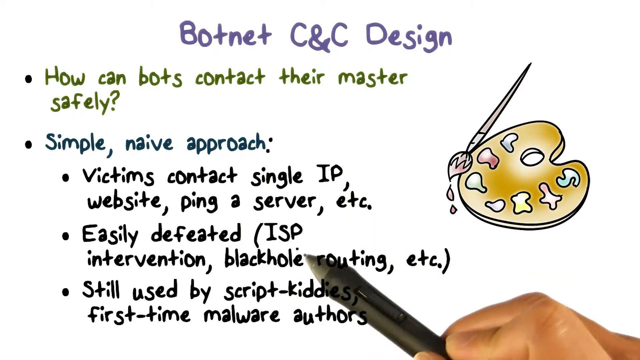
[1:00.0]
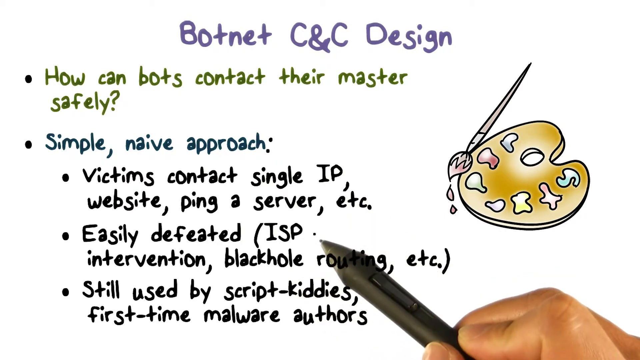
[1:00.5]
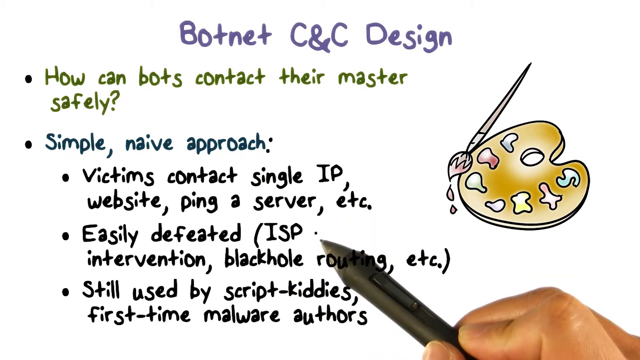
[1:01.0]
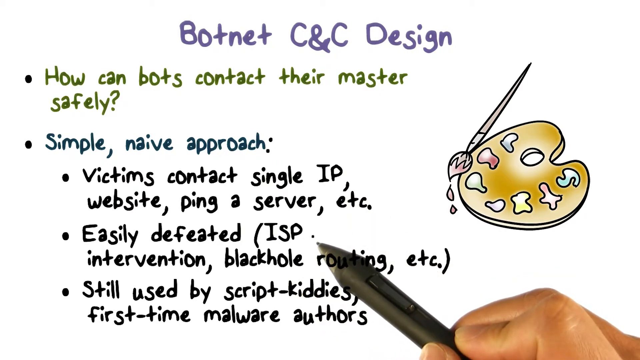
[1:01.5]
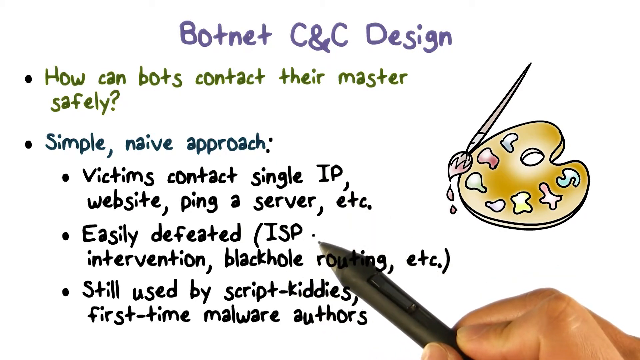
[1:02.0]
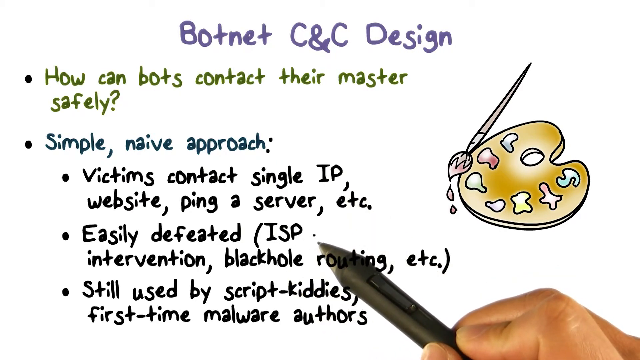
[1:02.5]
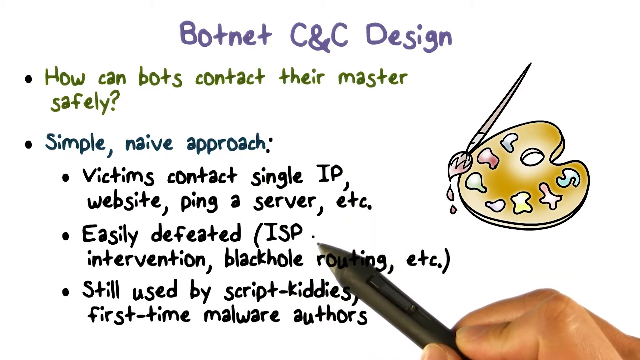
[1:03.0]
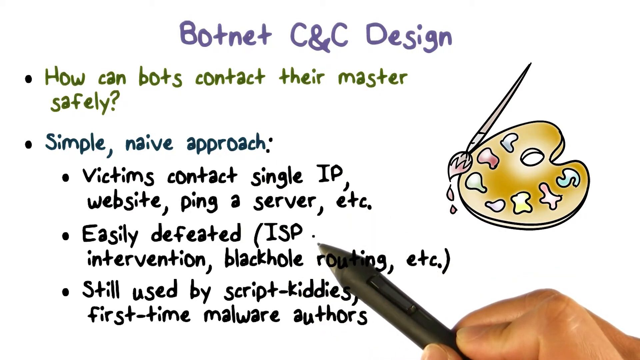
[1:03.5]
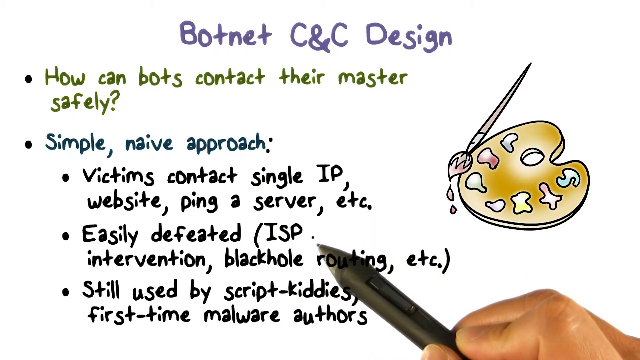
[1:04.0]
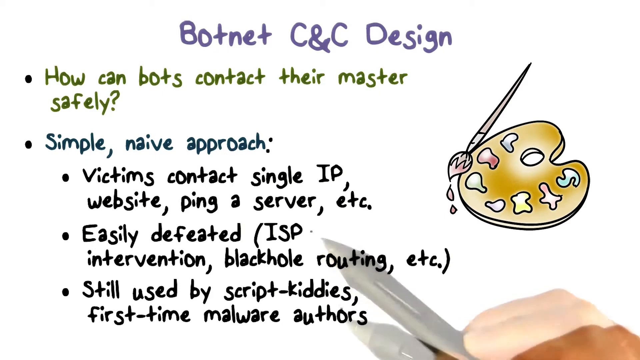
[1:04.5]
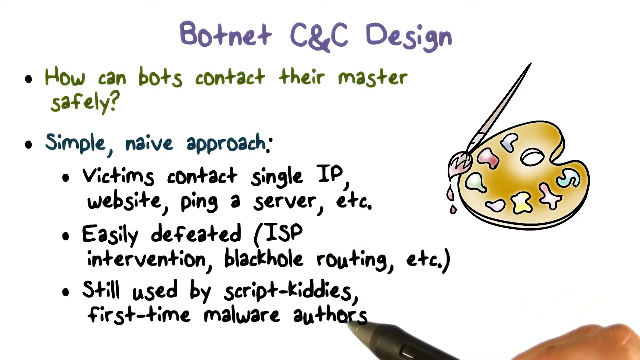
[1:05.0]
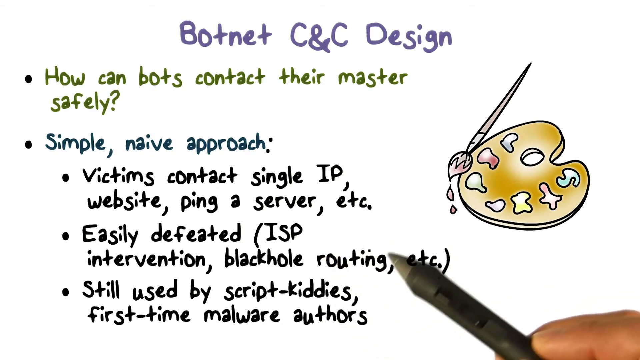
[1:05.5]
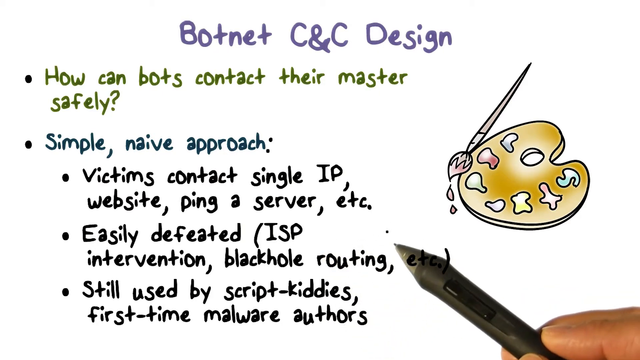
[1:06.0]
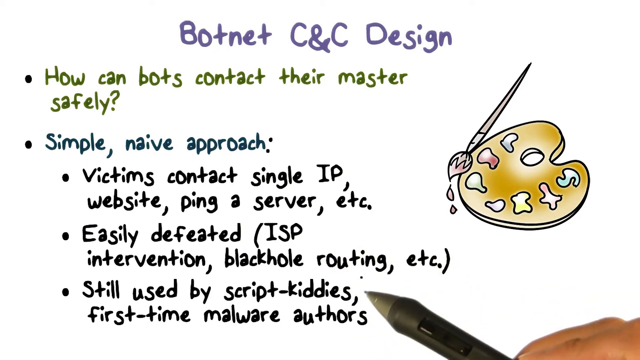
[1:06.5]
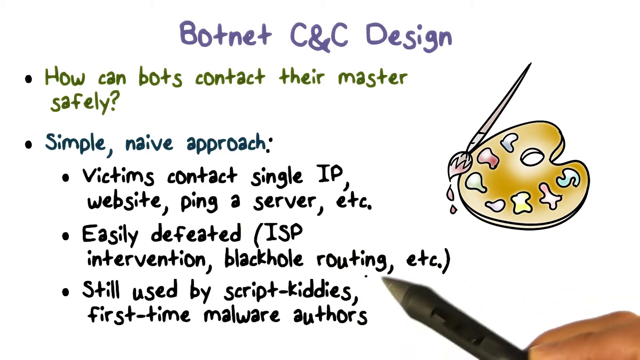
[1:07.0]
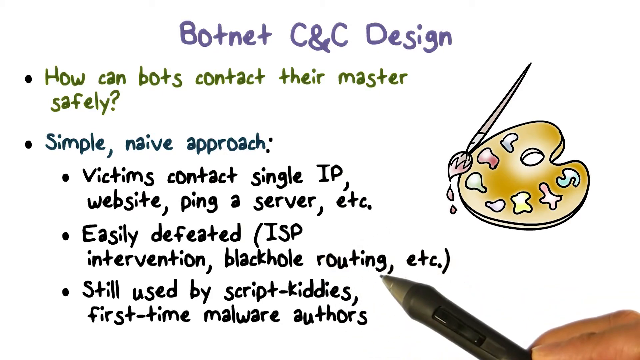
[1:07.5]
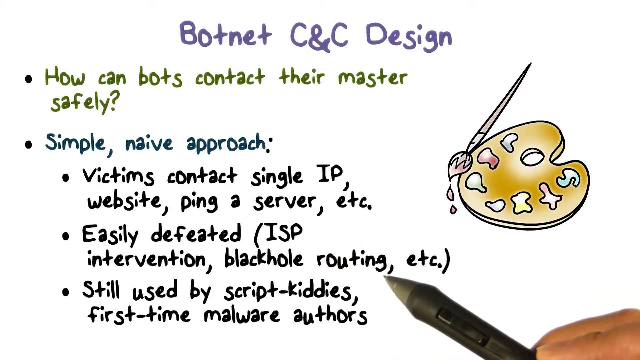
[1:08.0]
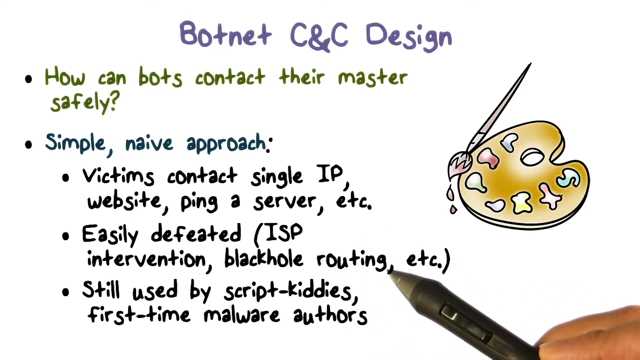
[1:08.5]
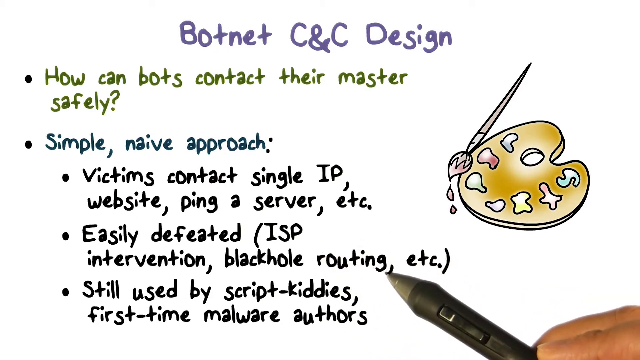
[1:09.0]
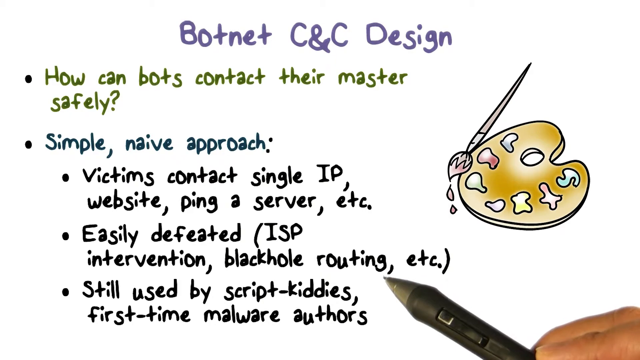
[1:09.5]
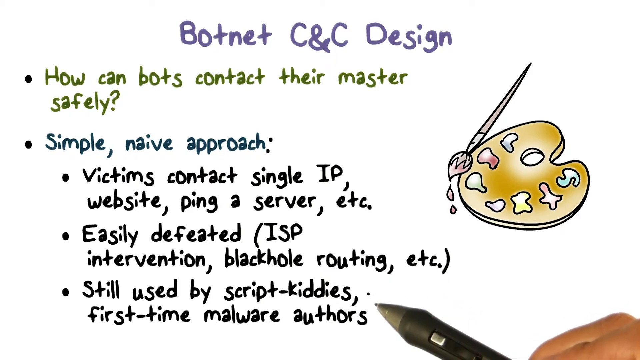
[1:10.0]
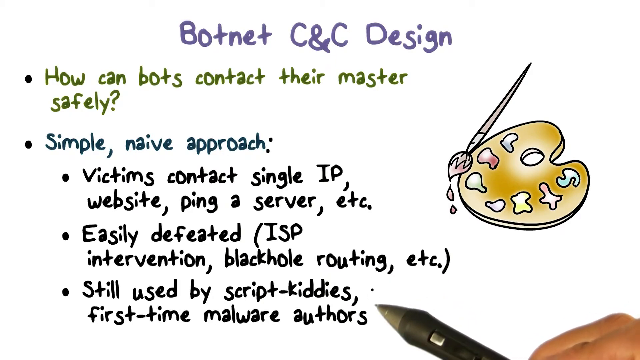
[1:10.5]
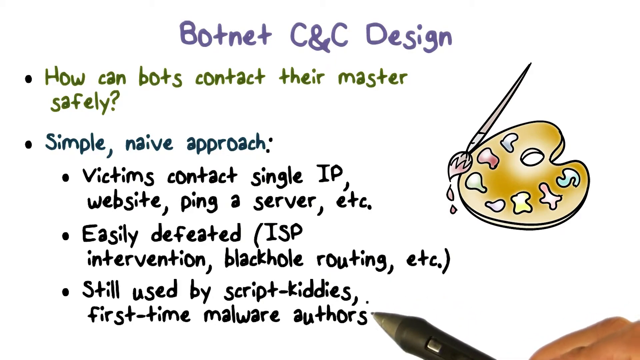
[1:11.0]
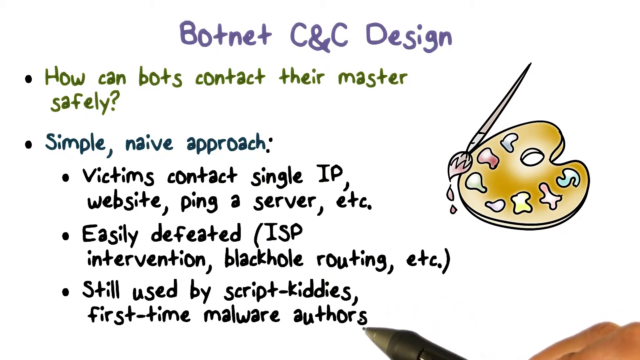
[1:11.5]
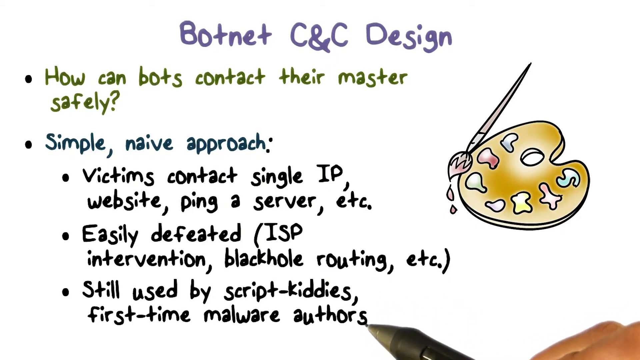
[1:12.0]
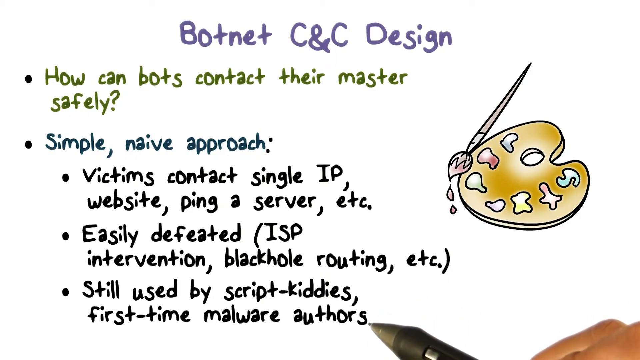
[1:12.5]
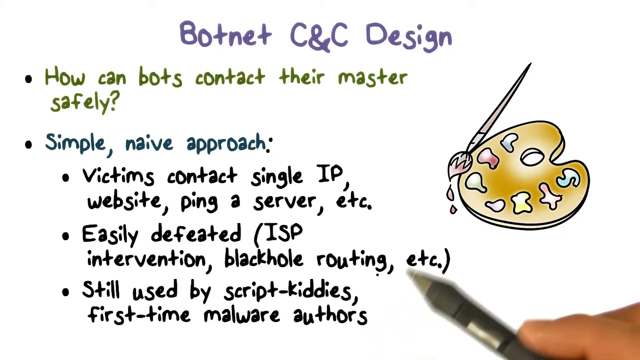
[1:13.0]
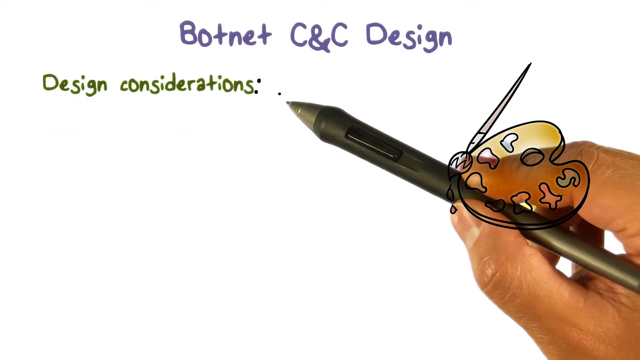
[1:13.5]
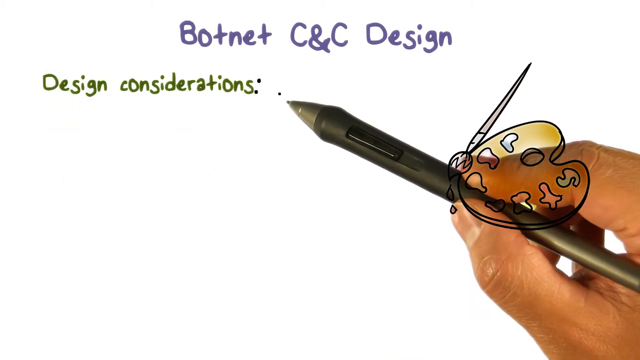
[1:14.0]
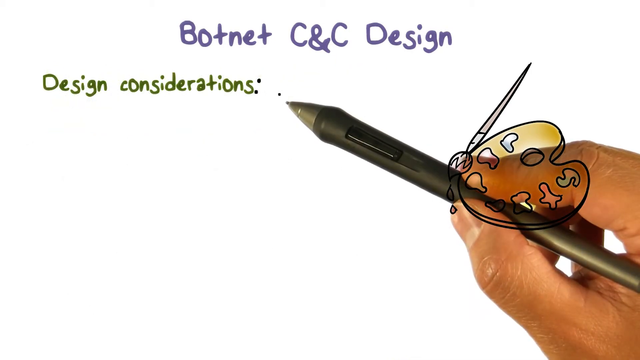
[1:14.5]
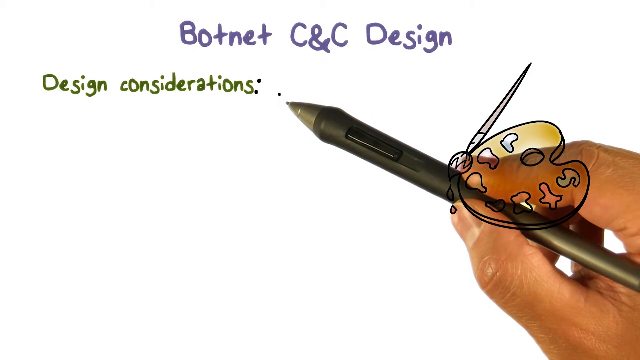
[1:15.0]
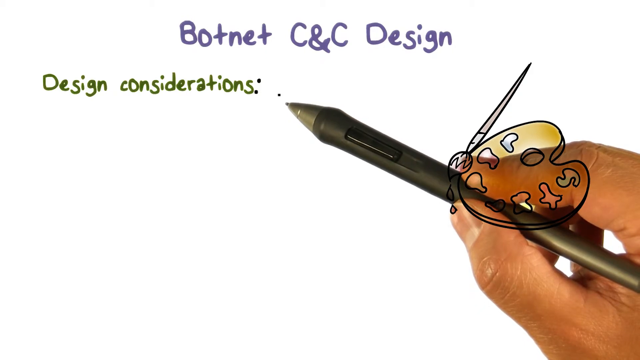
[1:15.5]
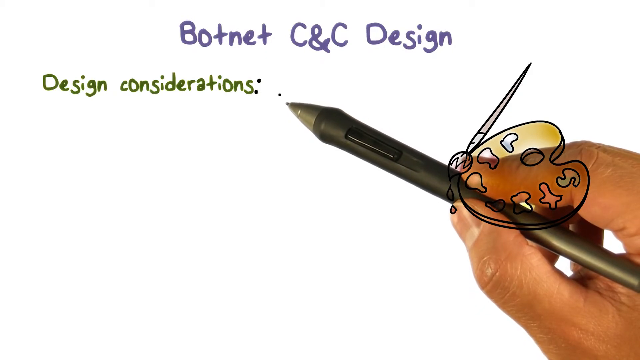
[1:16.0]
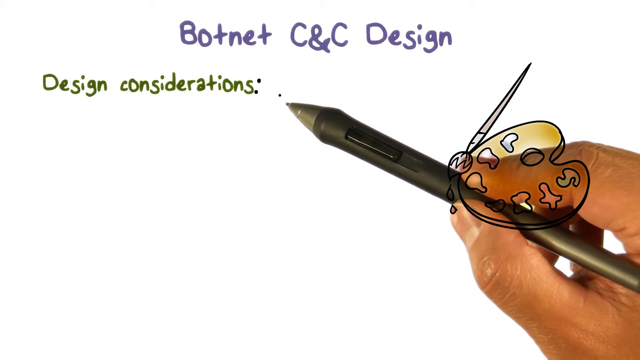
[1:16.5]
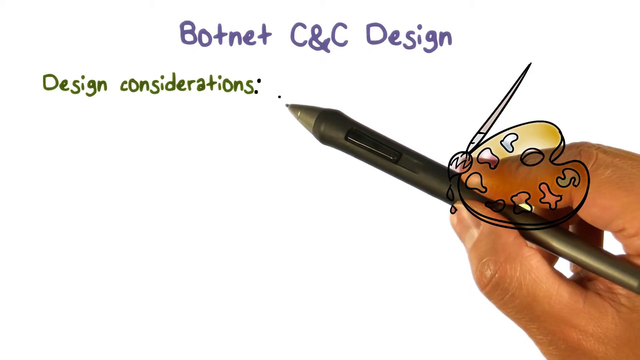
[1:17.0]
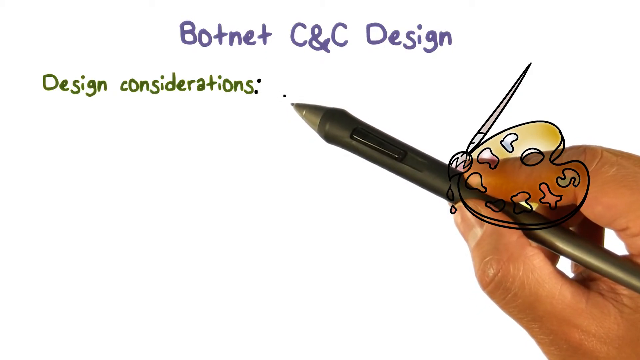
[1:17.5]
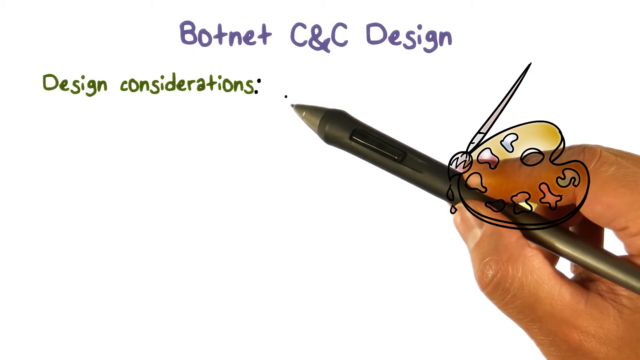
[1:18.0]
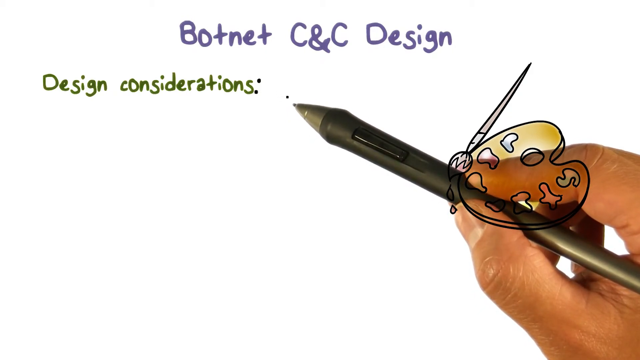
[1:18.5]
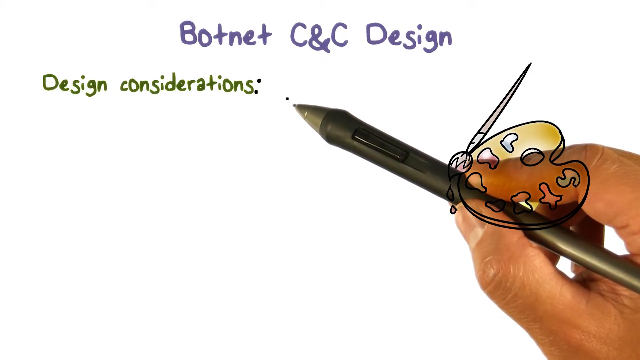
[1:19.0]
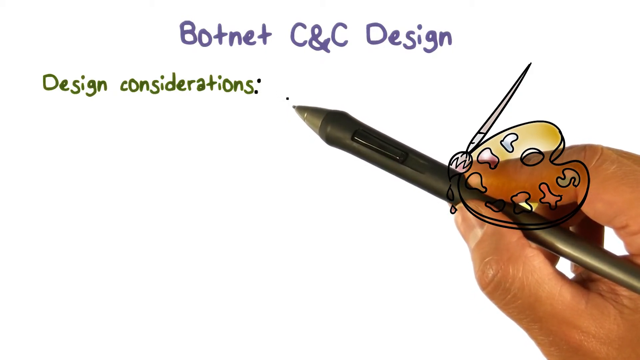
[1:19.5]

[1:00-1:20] The pen continues to highlight the last black bullet point, "still used by scripted kitties, first time malware." It highlights over this, clicks at the end, and the screen quickly fades into another slide. The new slide has blue text at the top reading "botnet CNC design" and, below it, bright green text reading "design considerations." The pen and fingers remain at the bottom right of the screen, with the pen now pointed at the green text. The colorful painting icon with the paintbrush and easel and different paint colors remains on the right-hand side of the screen; only the text seems to change. The pen hovers over the end of the new green text.